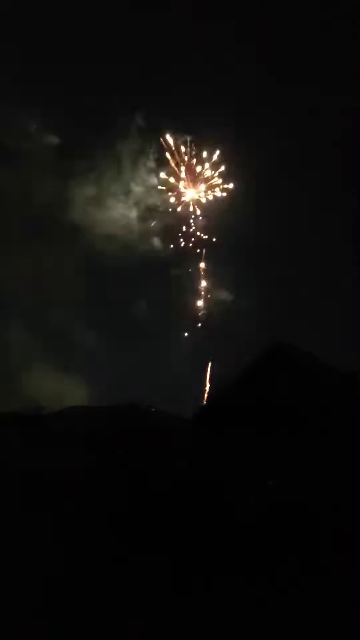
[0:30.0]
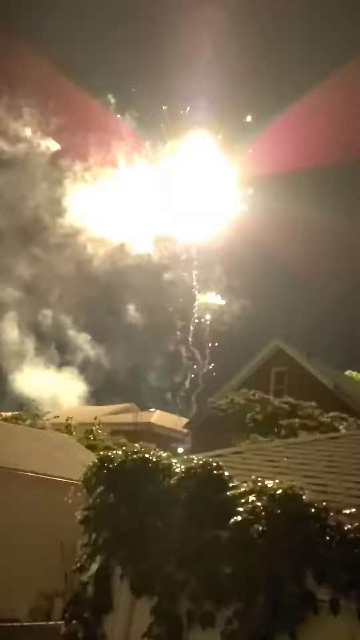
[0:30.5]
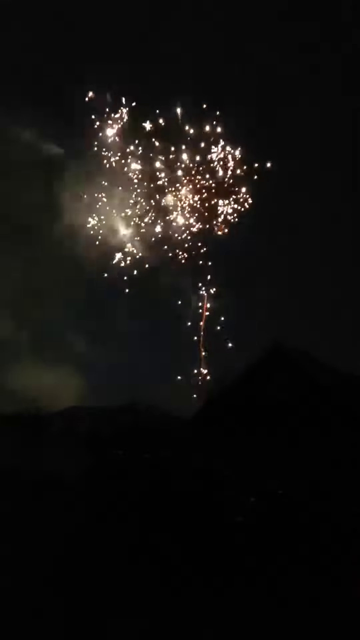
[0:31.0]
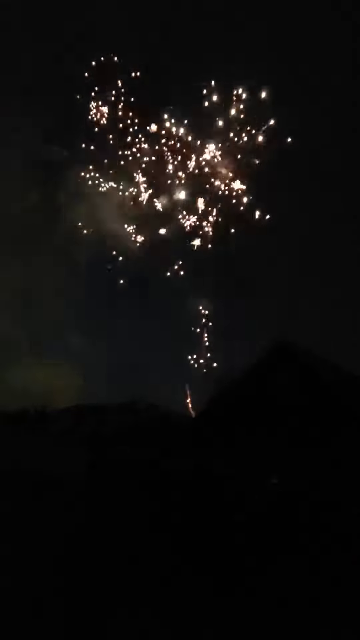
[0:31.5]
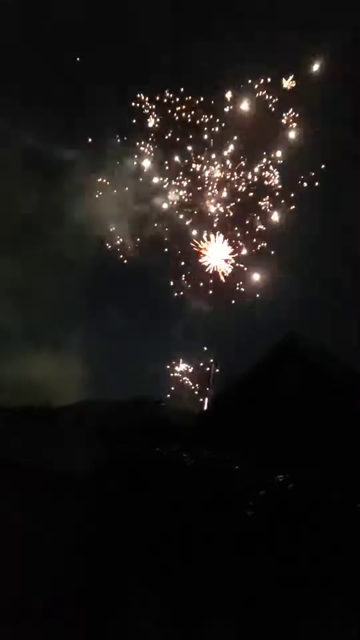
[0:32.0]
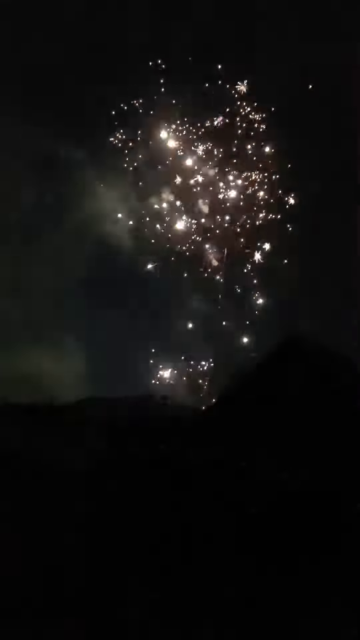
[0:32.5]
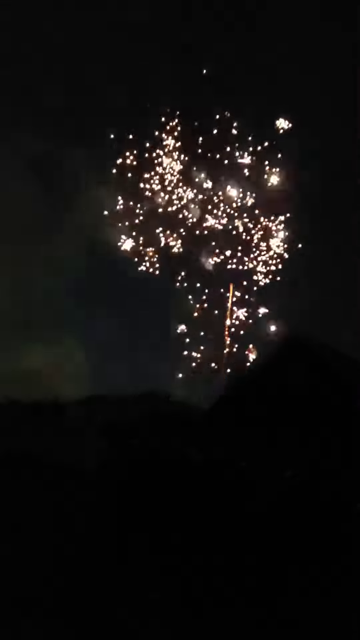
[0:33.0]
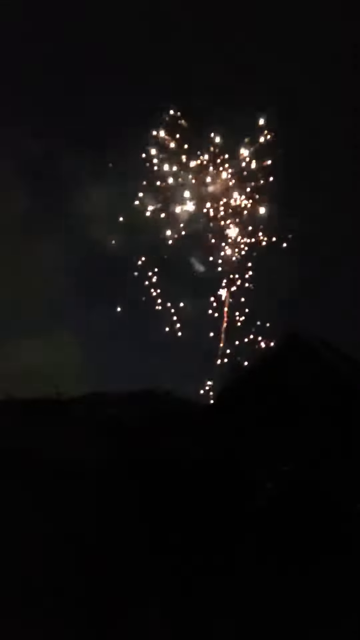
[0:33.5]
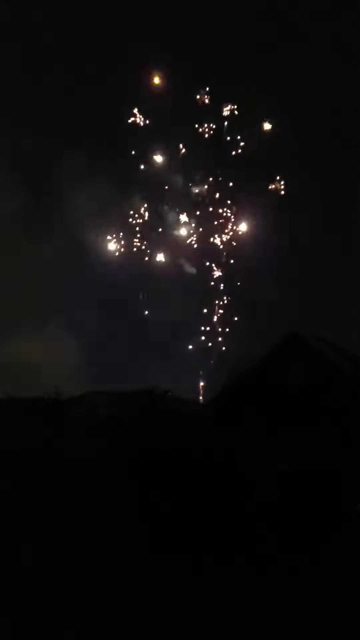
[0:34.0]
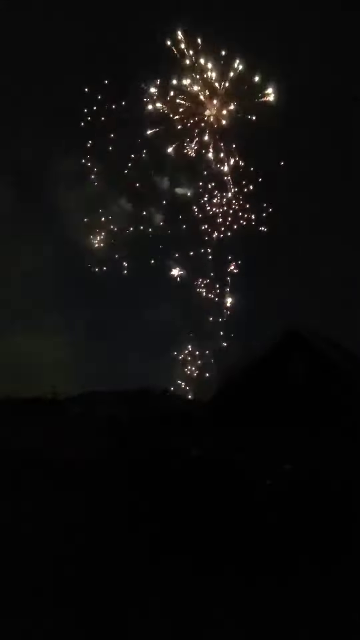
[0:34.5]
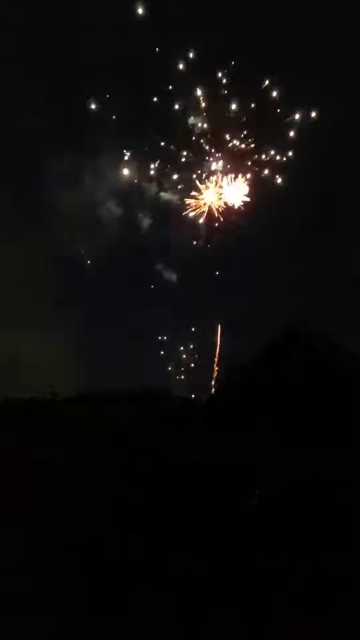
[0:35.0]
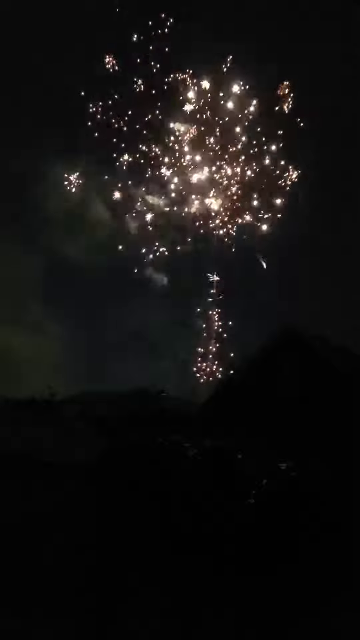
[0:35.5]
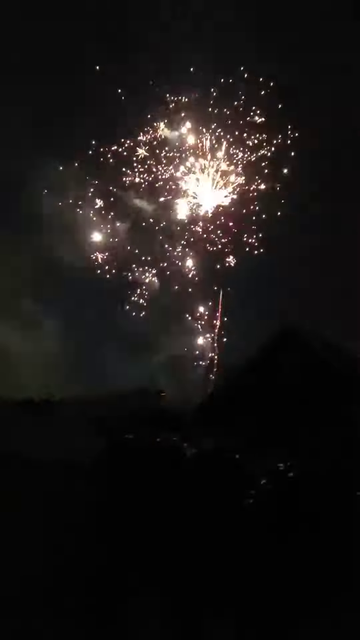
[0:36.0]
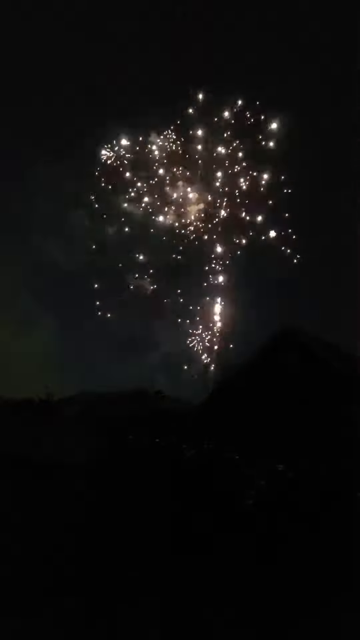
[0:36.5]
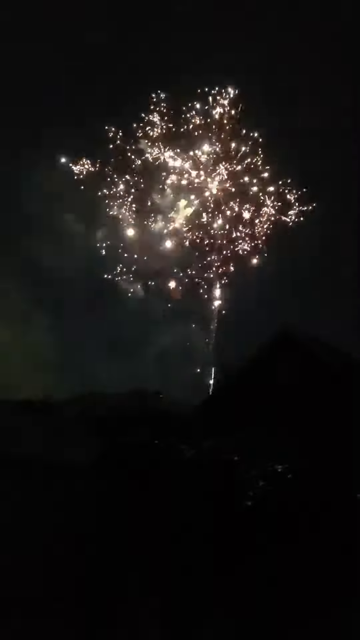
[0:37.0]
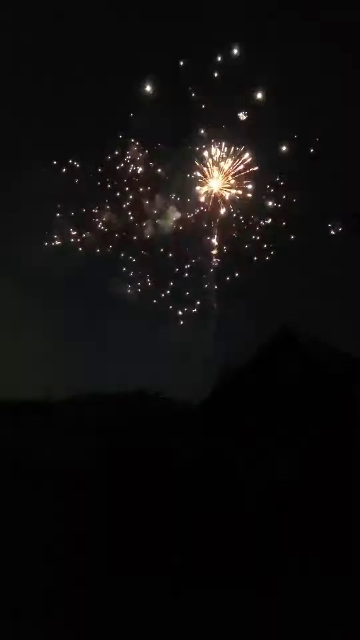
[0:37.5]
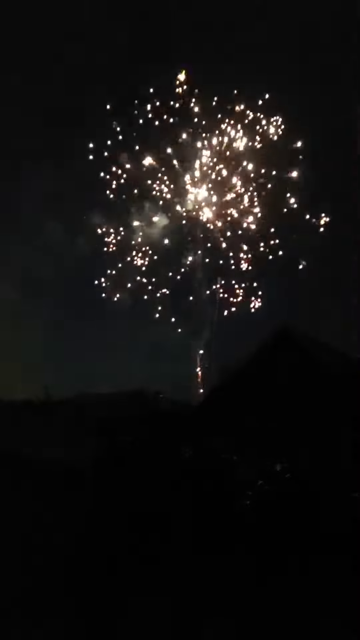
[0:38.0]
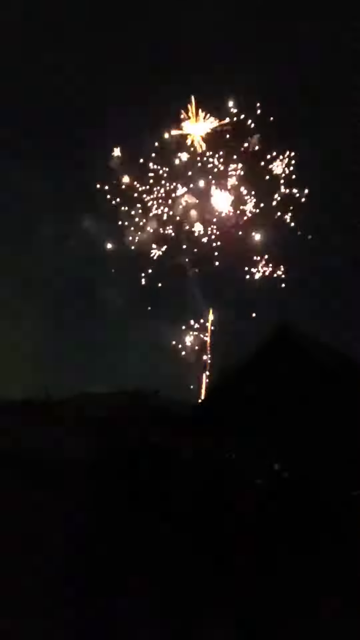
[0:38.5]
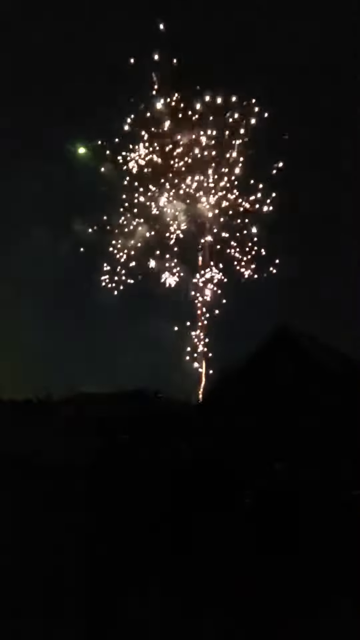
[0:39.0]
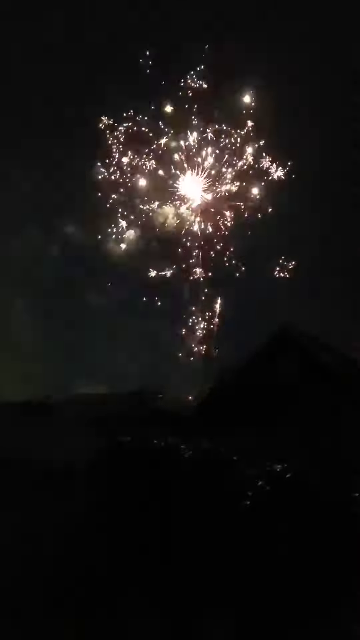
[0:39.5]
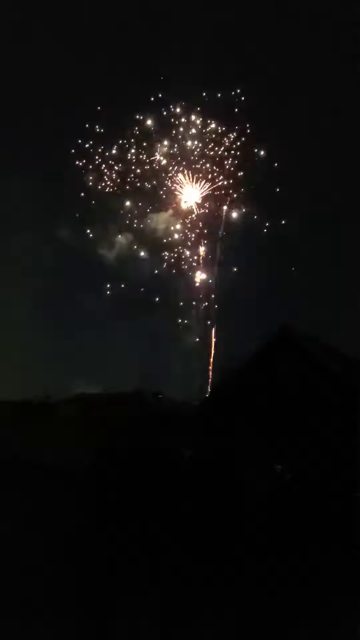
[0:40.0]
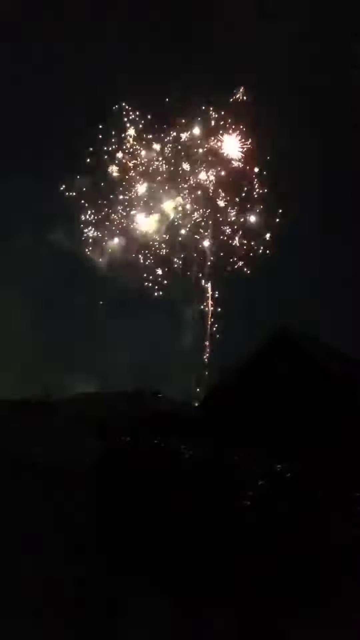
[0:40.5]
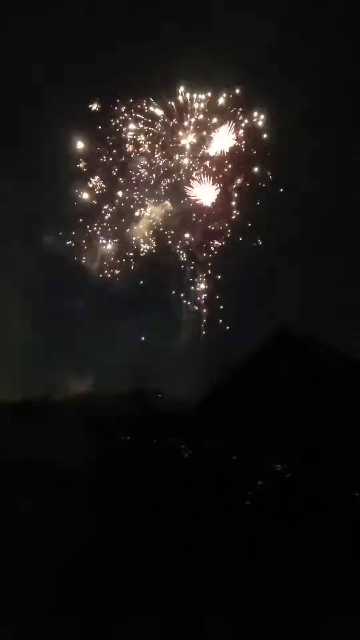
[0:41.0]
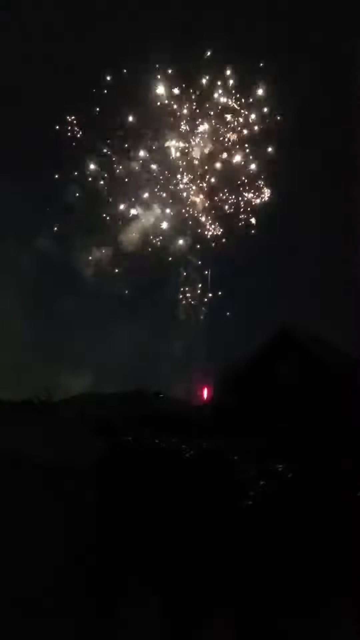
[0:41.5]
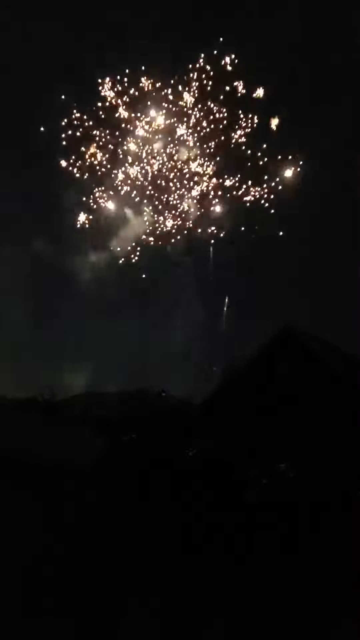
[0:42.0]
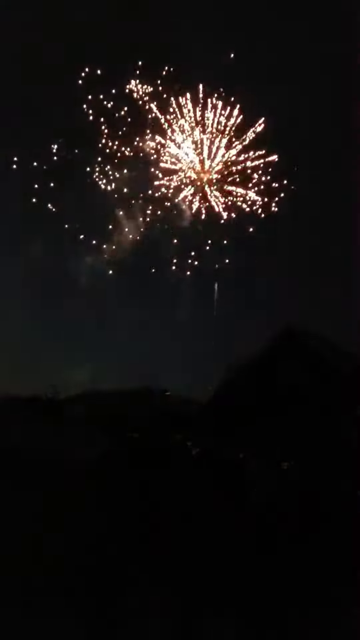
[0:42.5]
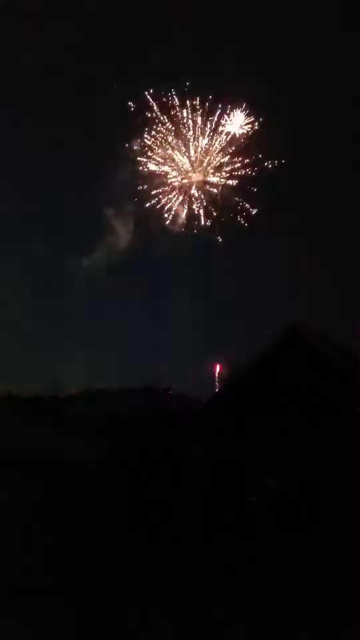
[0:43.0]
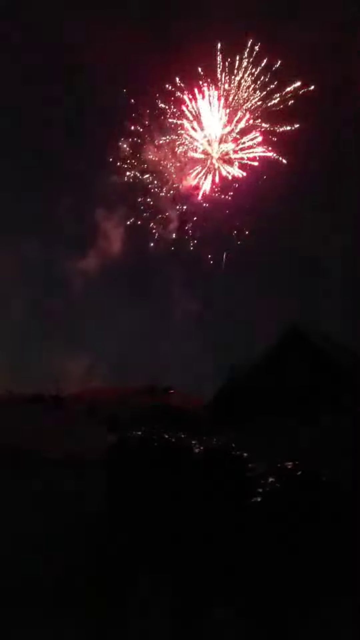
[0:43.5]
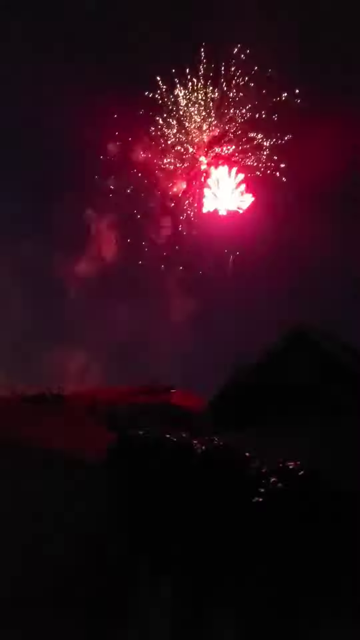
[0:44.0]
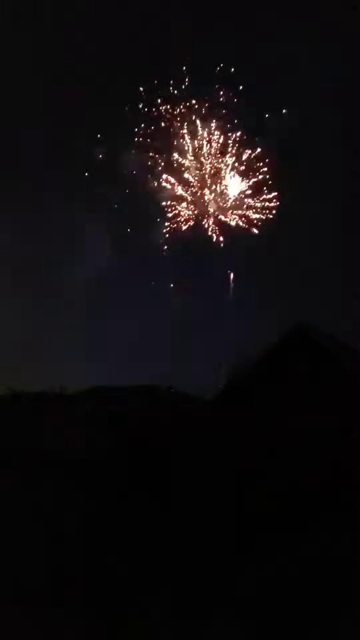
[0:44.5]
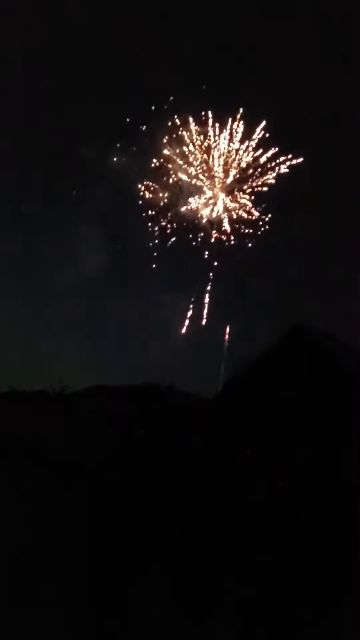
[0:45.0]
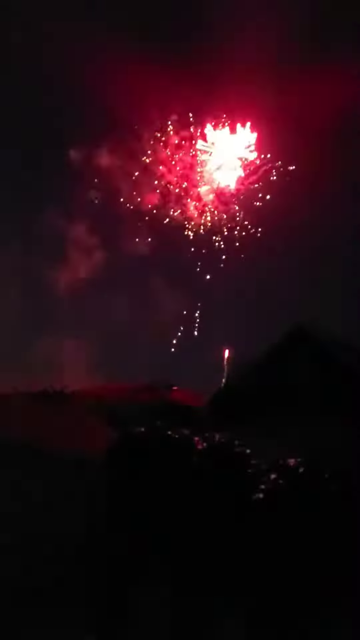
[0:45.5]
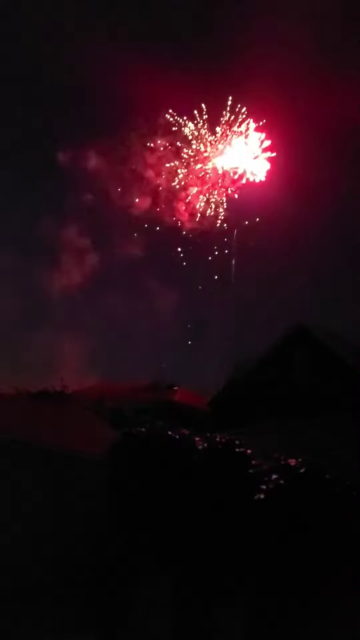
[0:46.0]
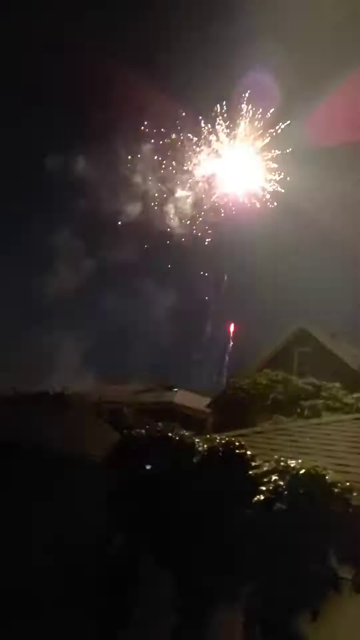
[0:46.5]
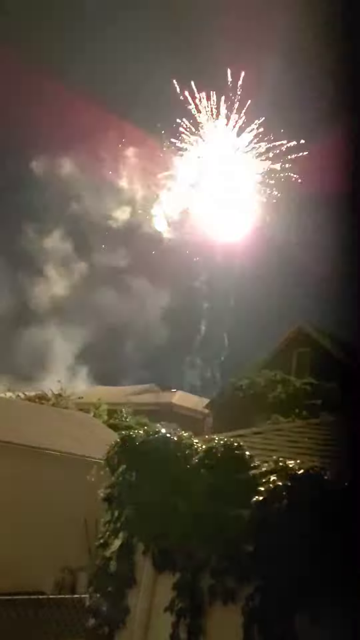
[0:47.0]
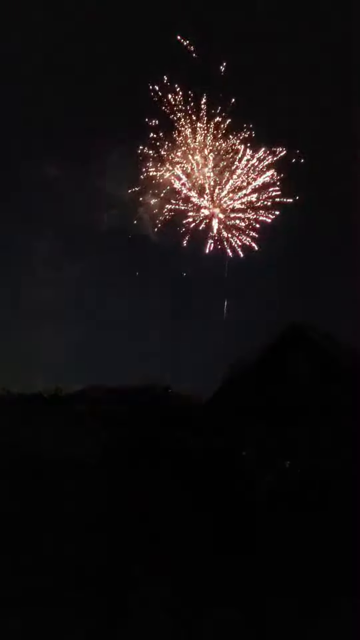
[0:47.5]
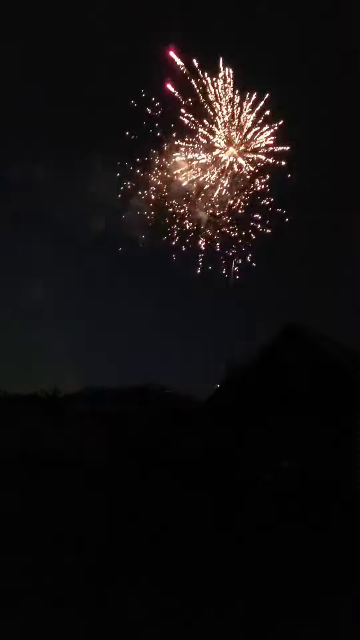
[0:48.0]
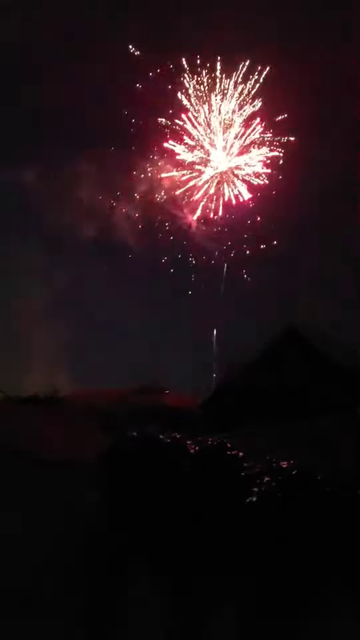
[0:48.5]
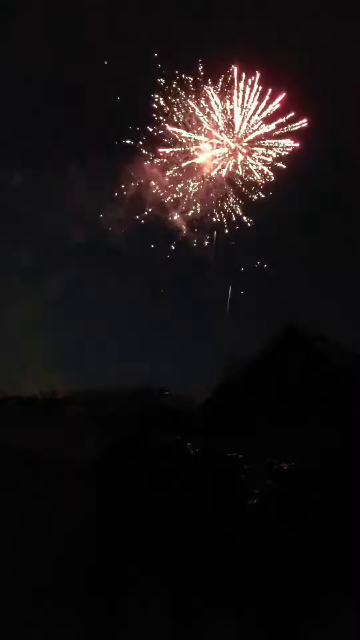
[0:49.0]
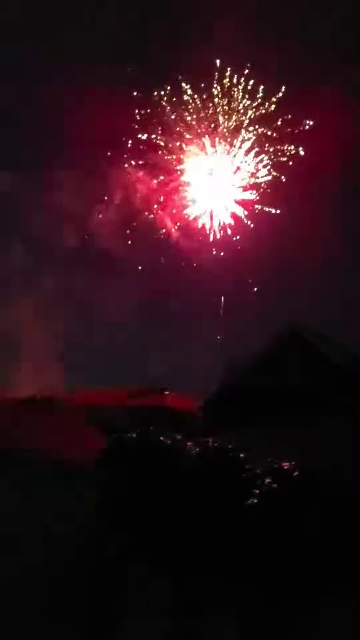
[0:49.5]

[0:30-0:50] The fireworks become much more active, firing at a greater frequency and illuminating the night sky. Different fireworks are shot off, including ones that explode multiple times, as if the firework shoots up fireworks that also explode. The setting is outdoors, apparently in a farming community, with rows of crops visible in the foreground and a farmhouse in the background. Little of the setting can be seen because it is so dark; it is only revealed by the flashes of light when the fireworks explode, showing what seems to be some sort of agricultural community.